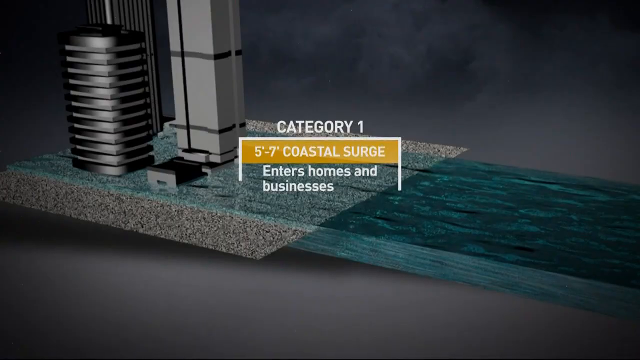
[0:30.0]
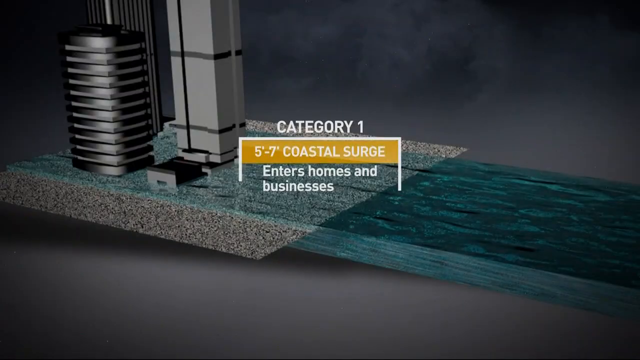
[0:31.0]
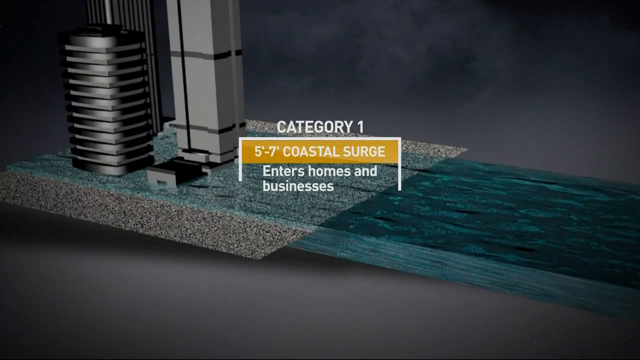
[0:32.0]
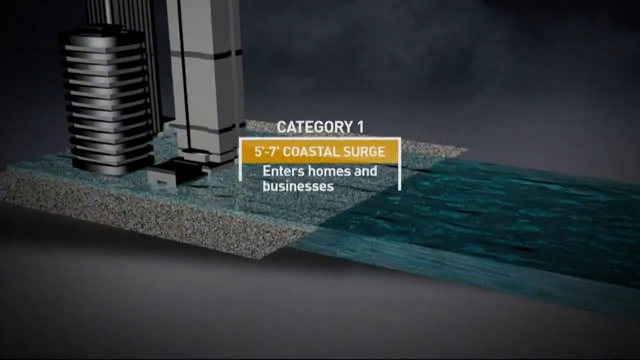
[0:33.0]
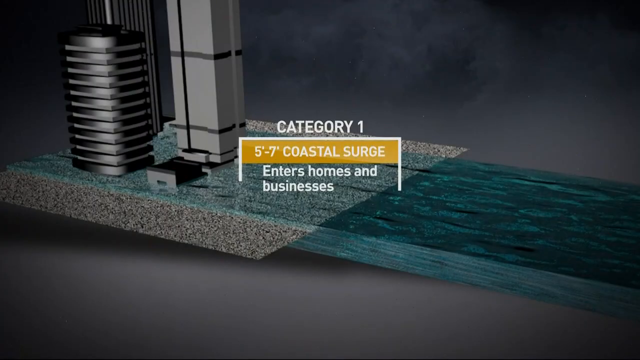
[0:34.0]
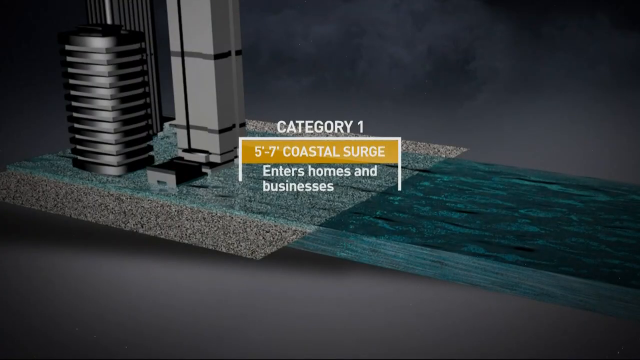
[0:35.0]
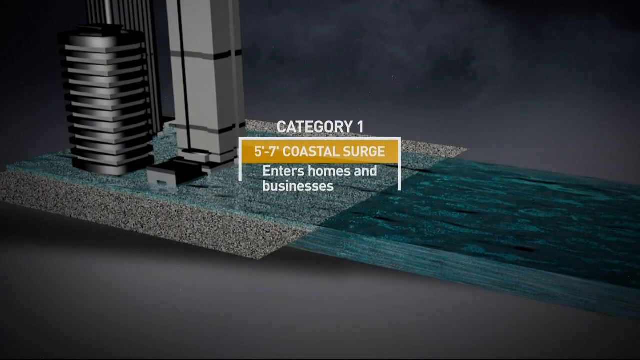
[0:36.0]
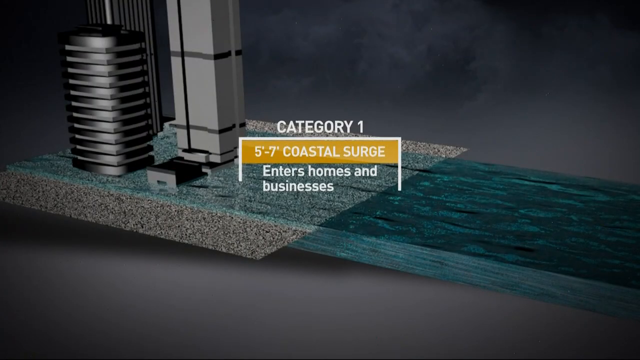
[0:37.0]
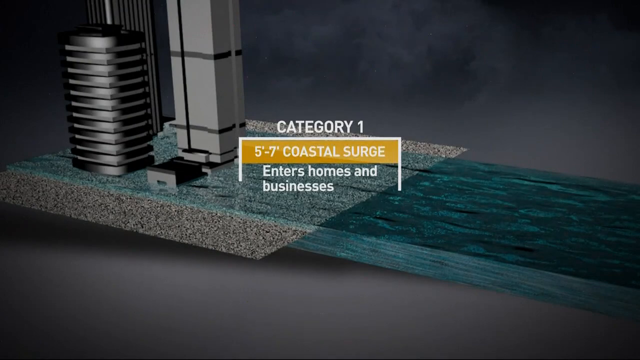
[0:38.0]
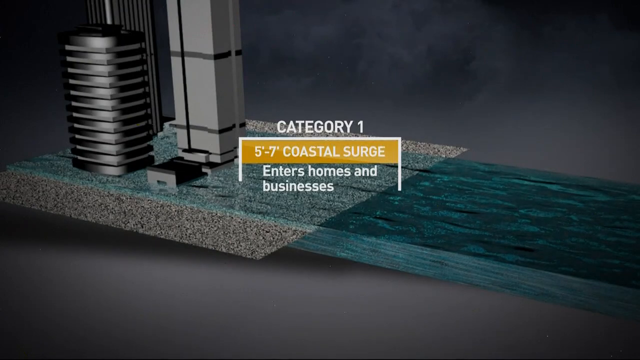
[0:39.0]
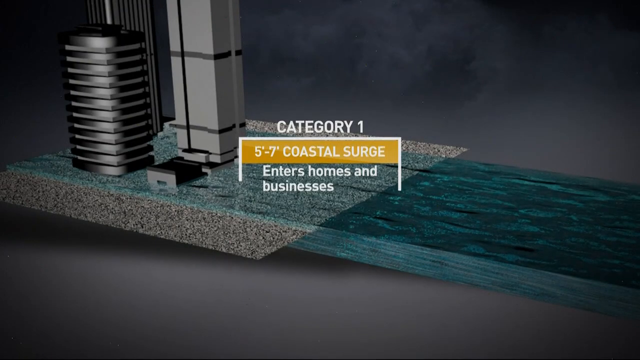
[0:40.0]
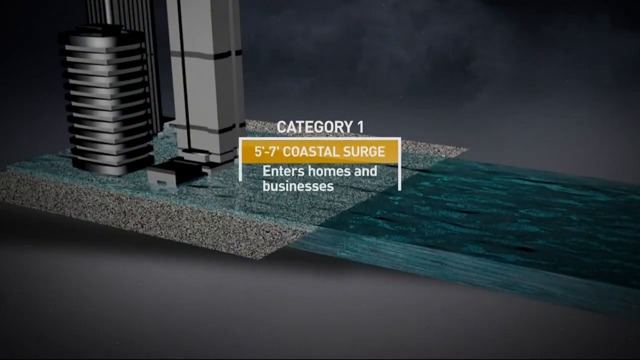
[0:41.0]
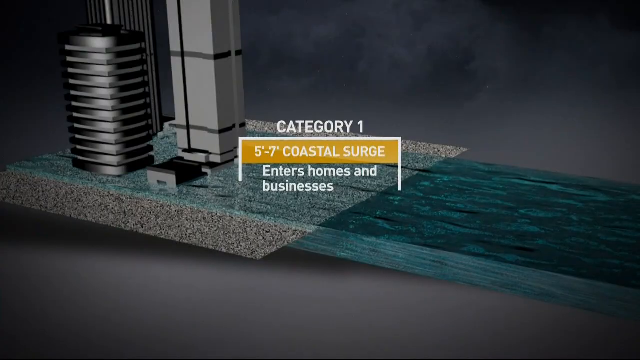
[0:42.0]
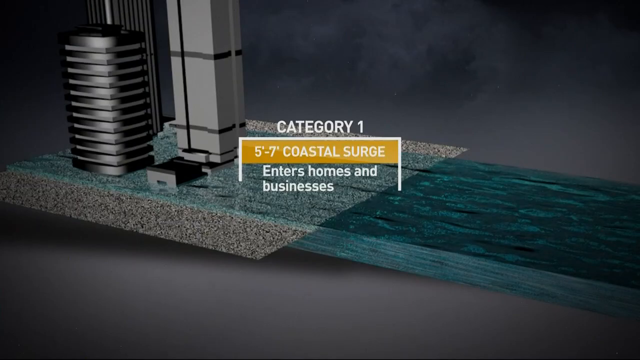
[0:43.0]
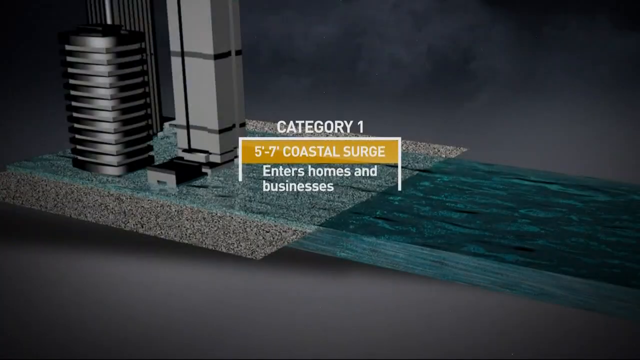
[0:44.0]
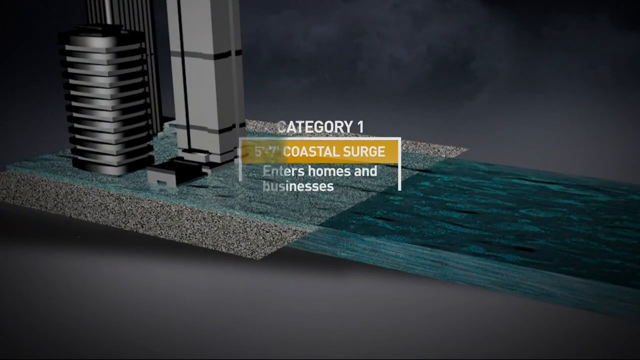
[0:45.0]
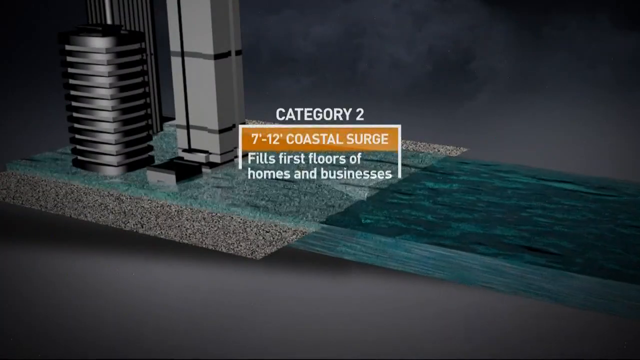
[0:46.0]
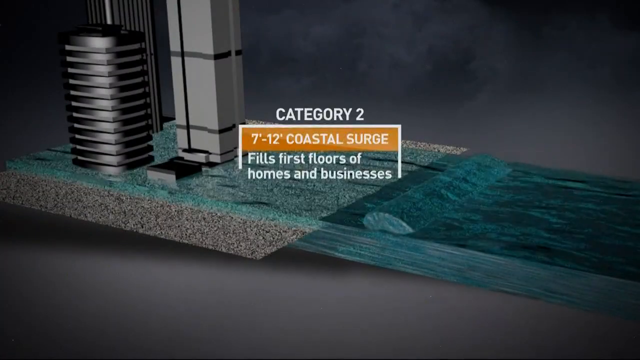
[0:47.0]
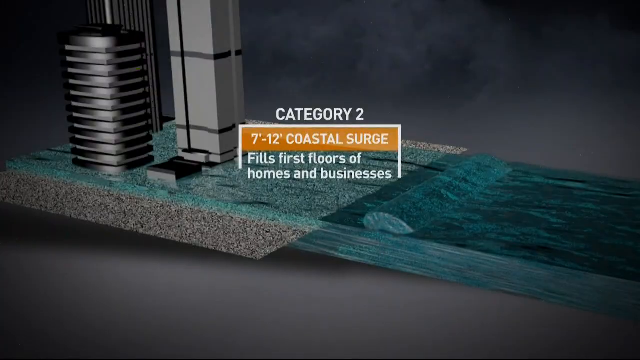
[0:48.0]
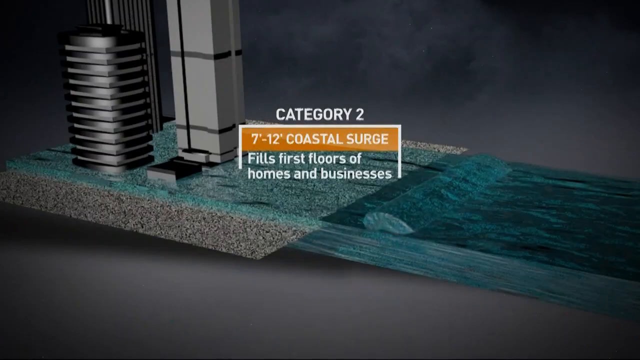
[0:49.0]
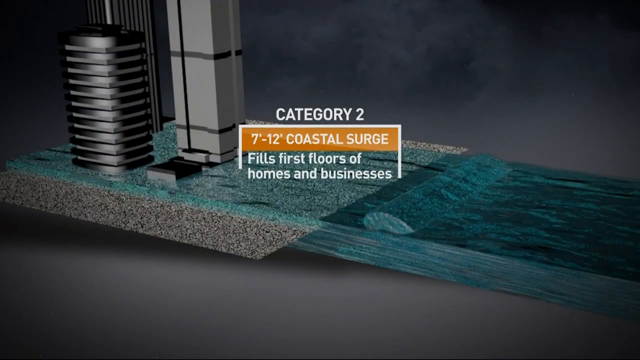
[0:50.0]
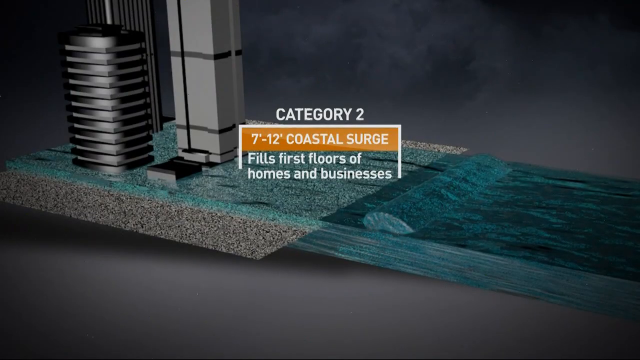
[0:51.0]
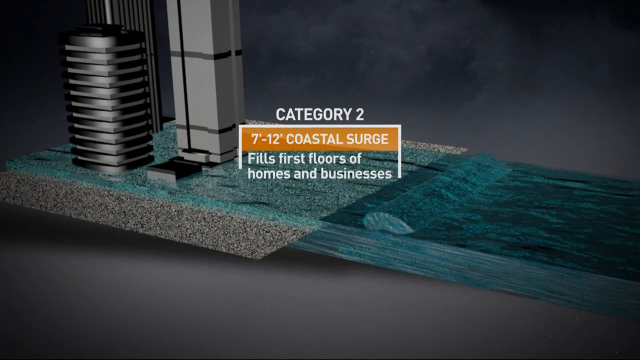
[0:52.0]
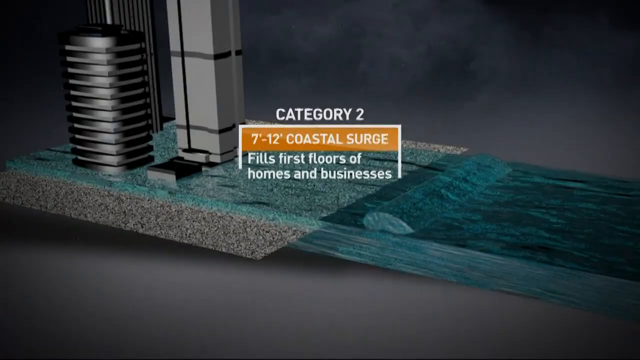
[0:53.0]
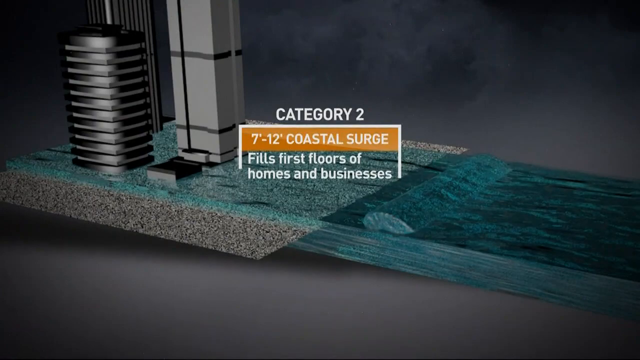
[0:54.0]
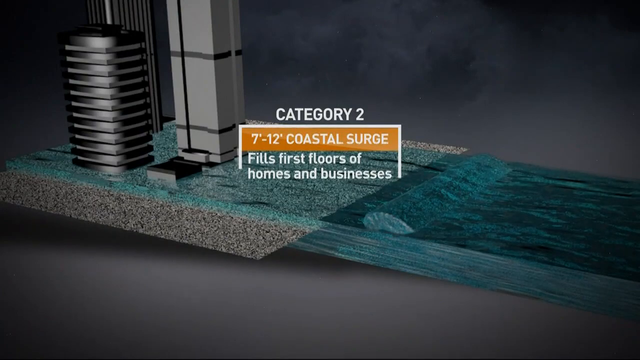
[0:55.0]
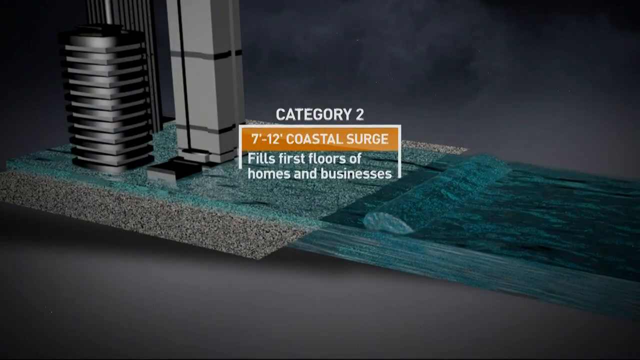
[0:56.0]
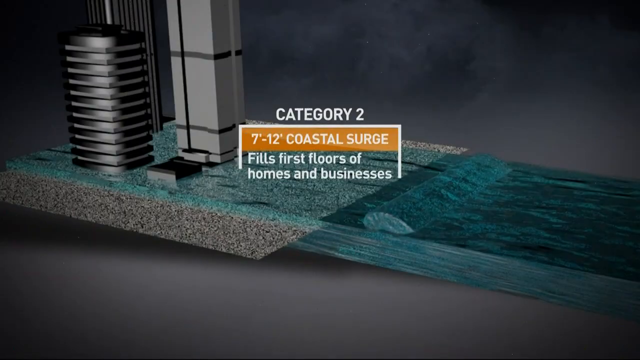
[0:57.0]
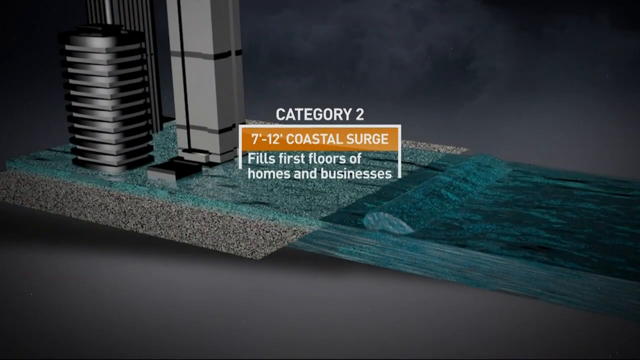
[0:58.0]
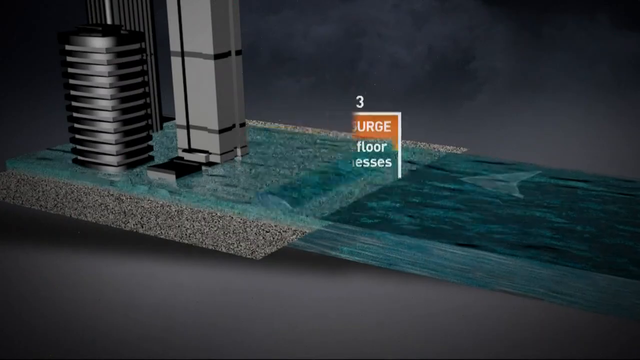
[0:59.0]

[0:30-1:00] The weather report now shows a black background with words flashing in the centre reading "category 1, 5 to 7 coastal surge", and at the bottom "enters home and businesses". On the left side there are two unidentified things: one is gray and black, and the other is black. The ground looks tiled in gray and black, and on the right side there is a green tile, with the bottom part gray and black. The words wave to the right and to the left side and then remain on the screen.